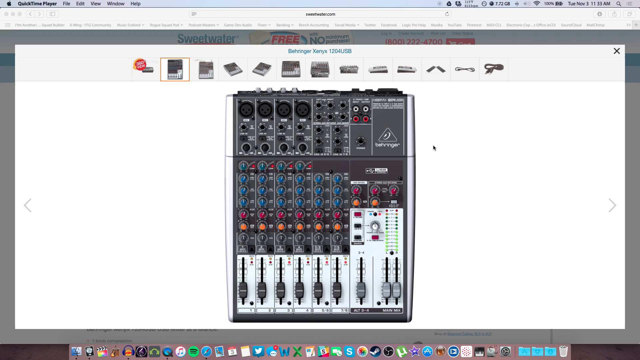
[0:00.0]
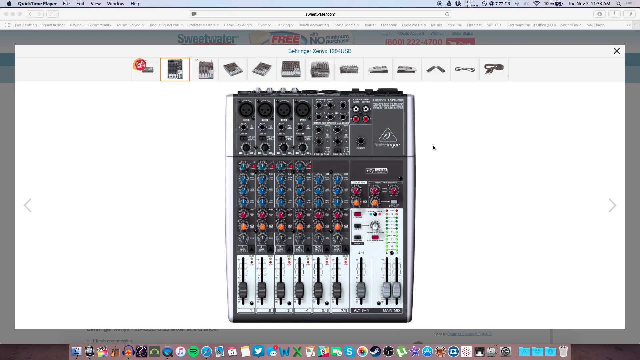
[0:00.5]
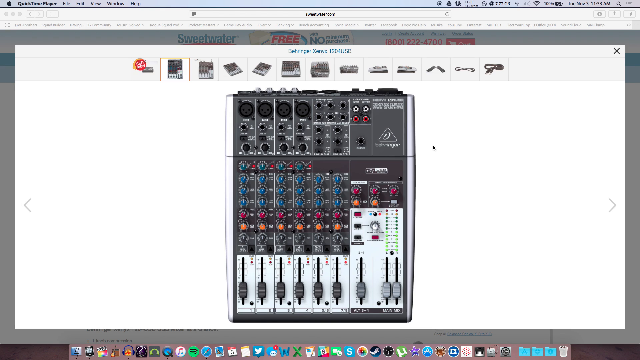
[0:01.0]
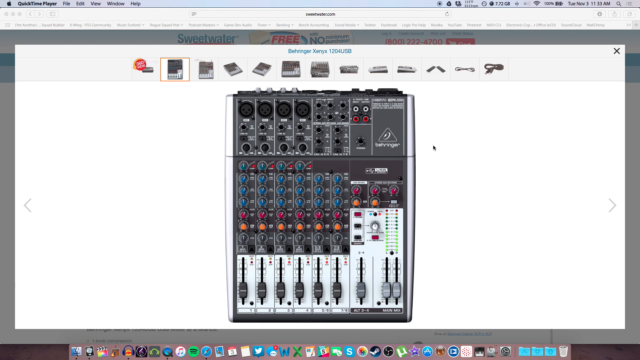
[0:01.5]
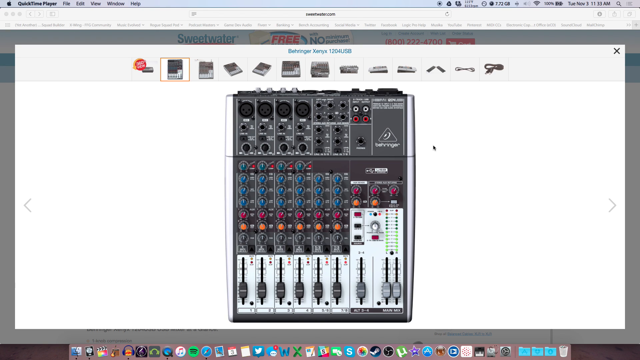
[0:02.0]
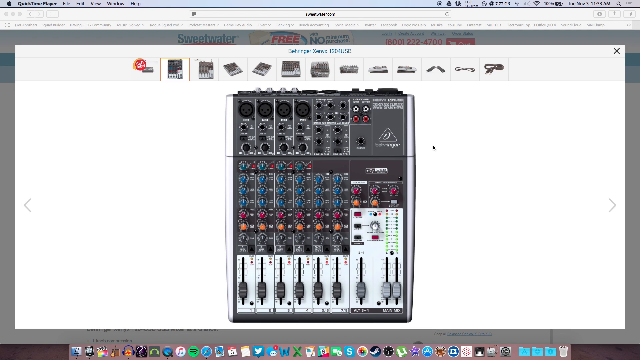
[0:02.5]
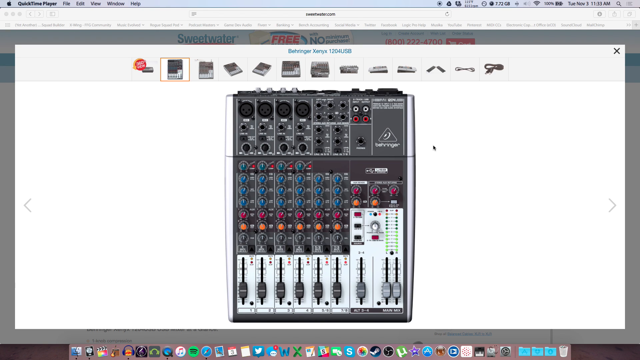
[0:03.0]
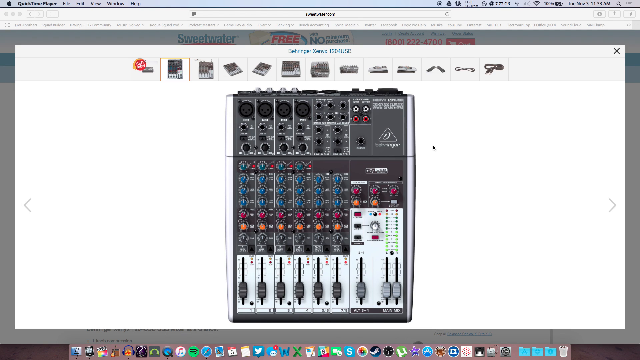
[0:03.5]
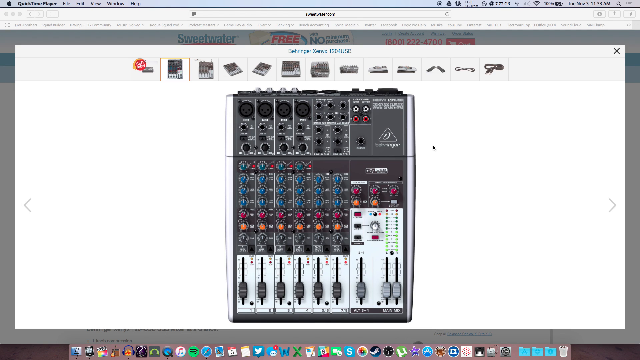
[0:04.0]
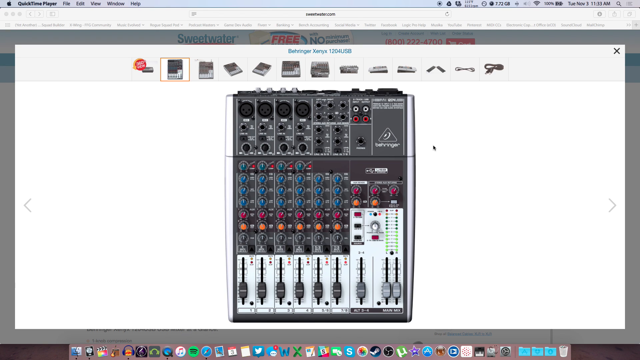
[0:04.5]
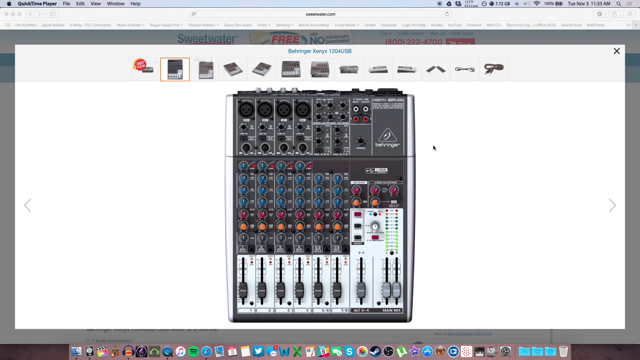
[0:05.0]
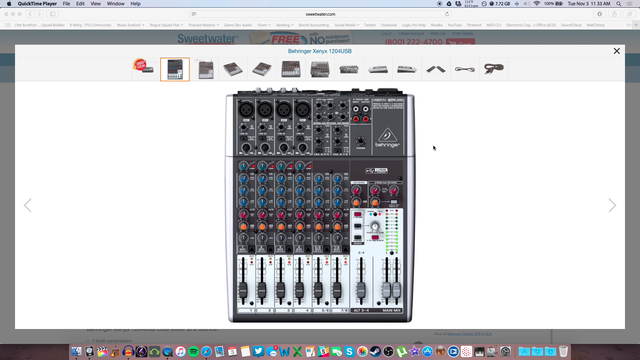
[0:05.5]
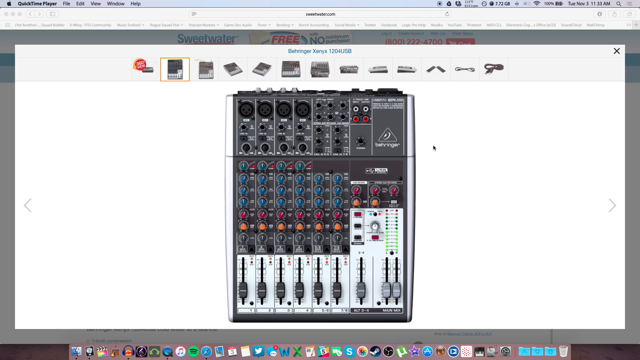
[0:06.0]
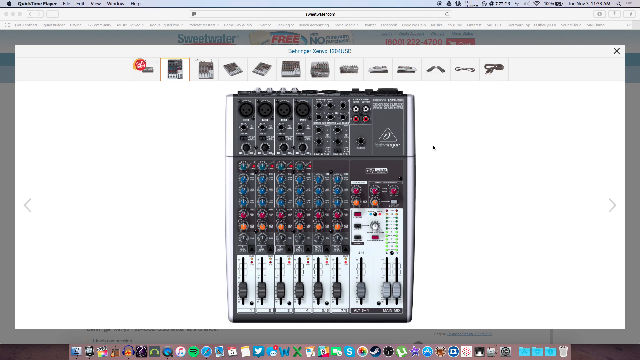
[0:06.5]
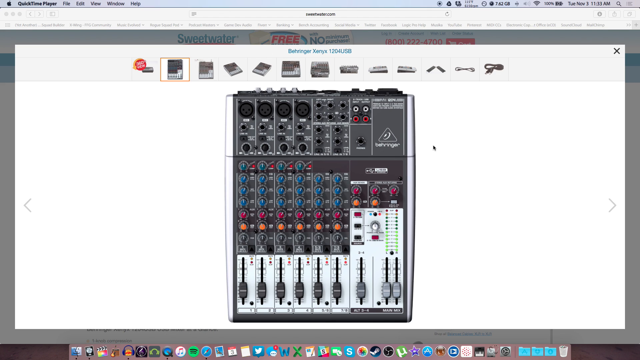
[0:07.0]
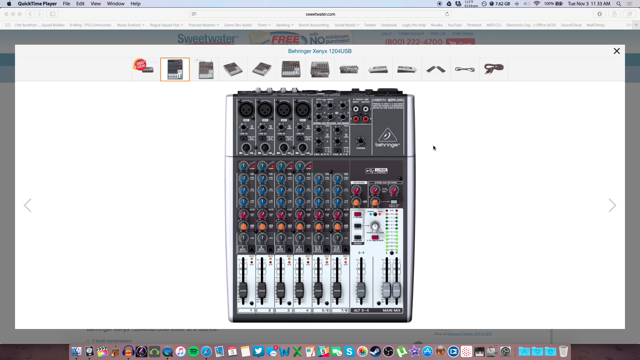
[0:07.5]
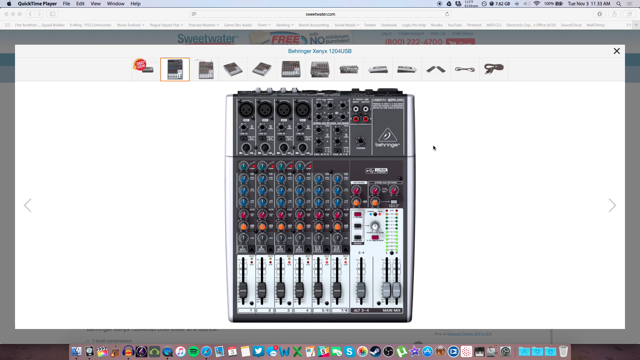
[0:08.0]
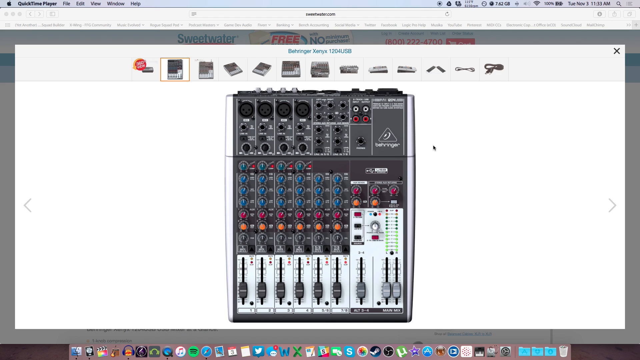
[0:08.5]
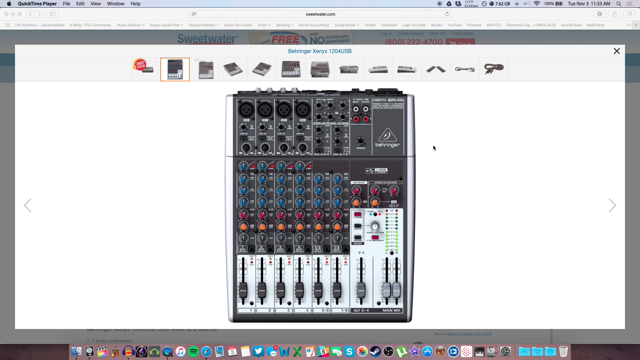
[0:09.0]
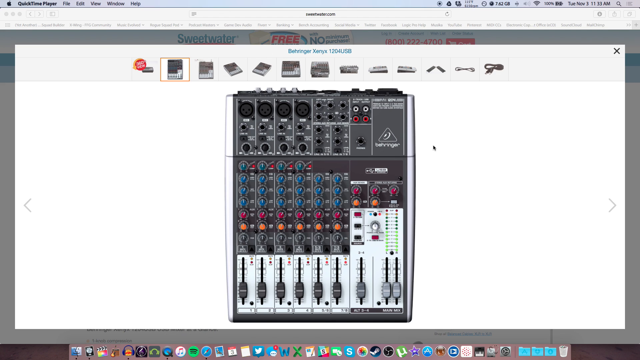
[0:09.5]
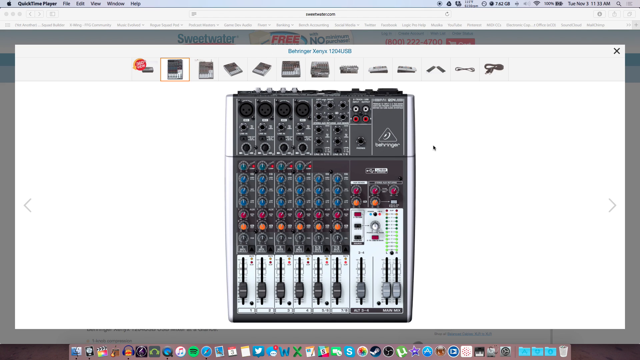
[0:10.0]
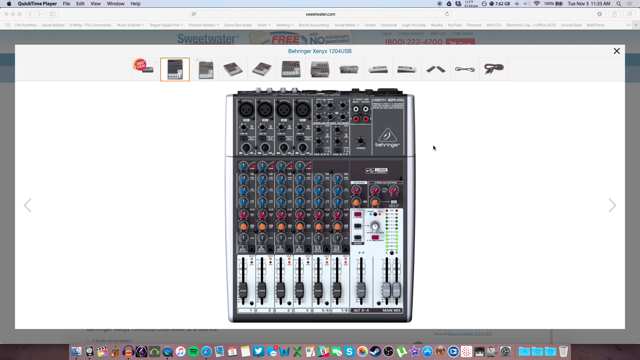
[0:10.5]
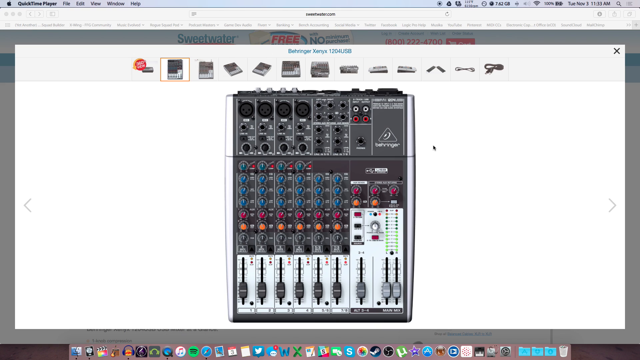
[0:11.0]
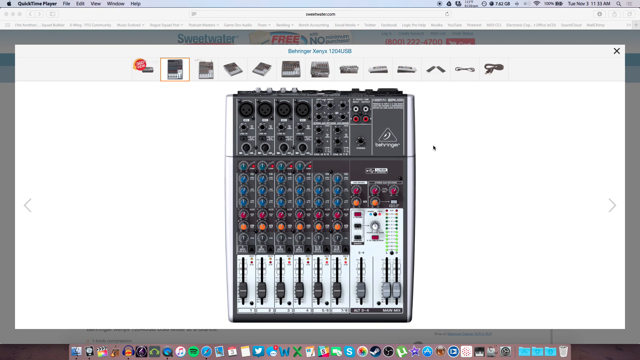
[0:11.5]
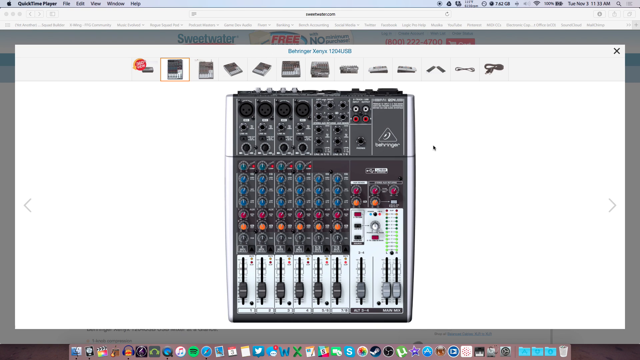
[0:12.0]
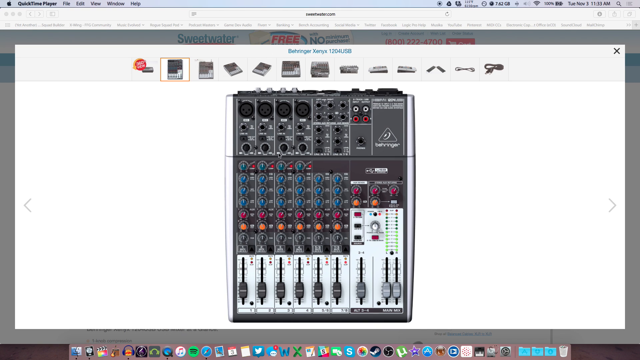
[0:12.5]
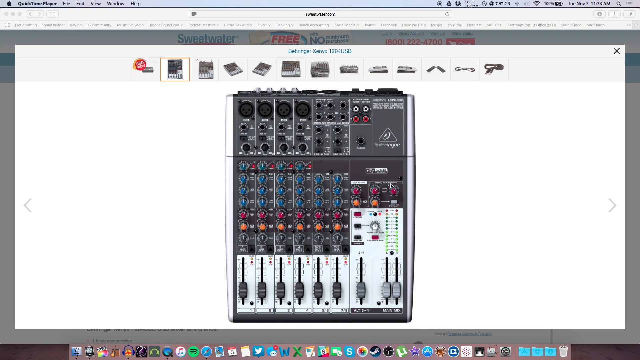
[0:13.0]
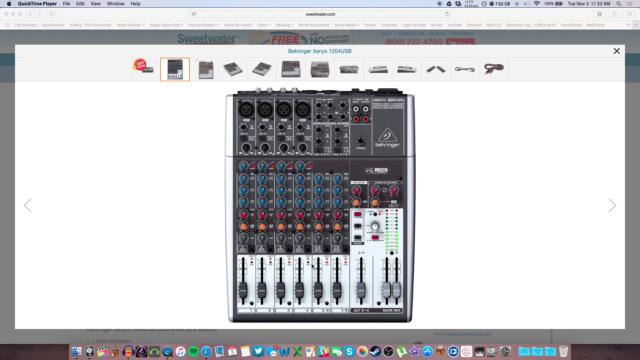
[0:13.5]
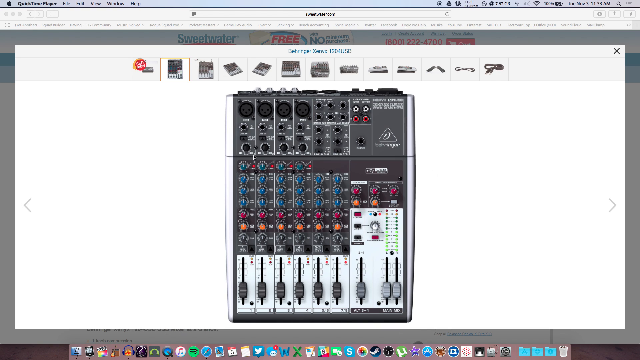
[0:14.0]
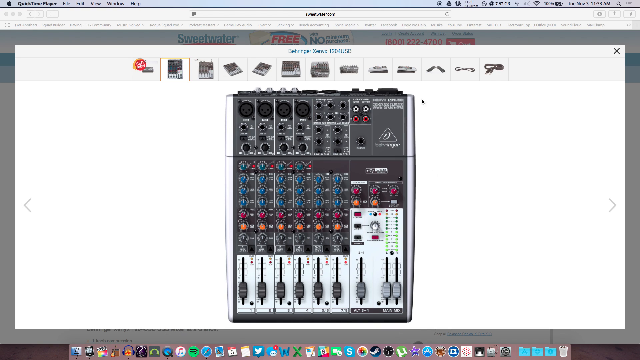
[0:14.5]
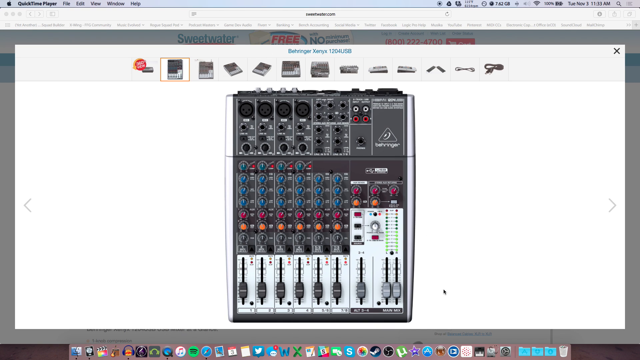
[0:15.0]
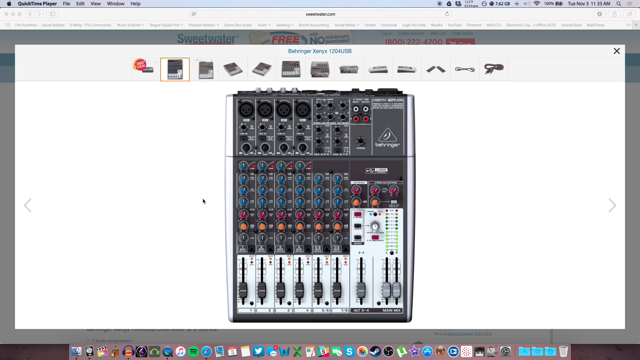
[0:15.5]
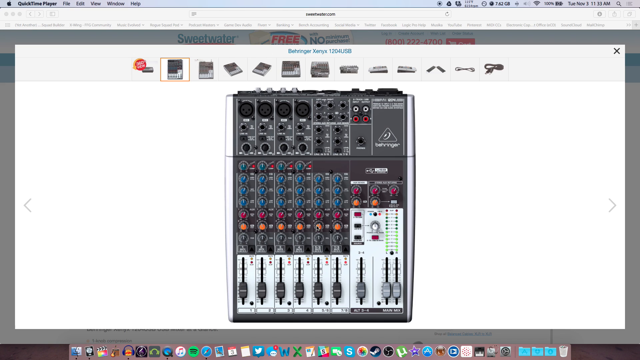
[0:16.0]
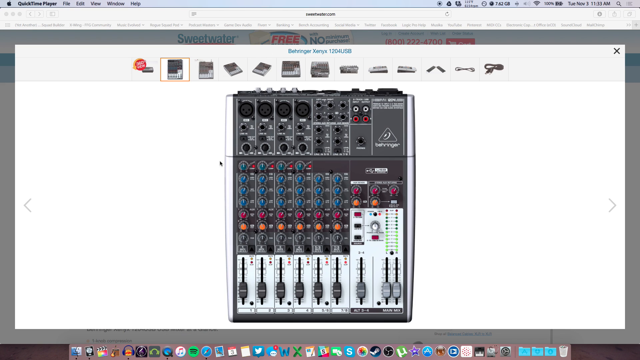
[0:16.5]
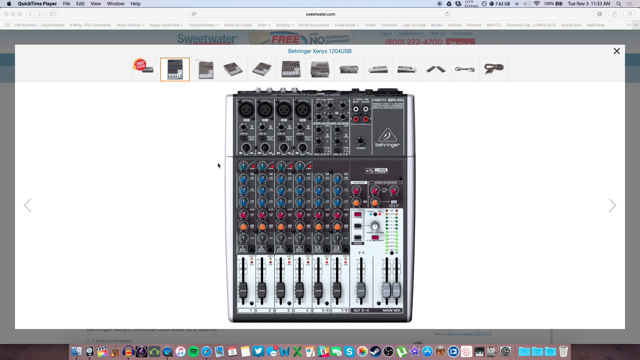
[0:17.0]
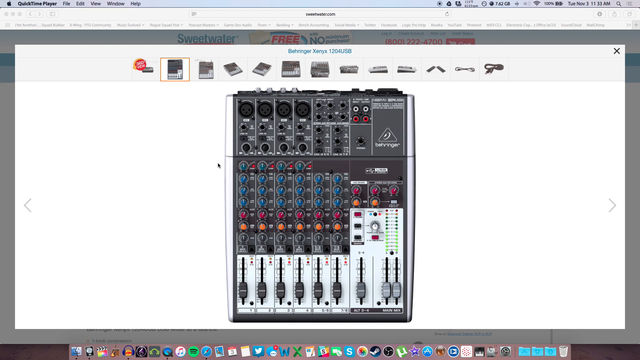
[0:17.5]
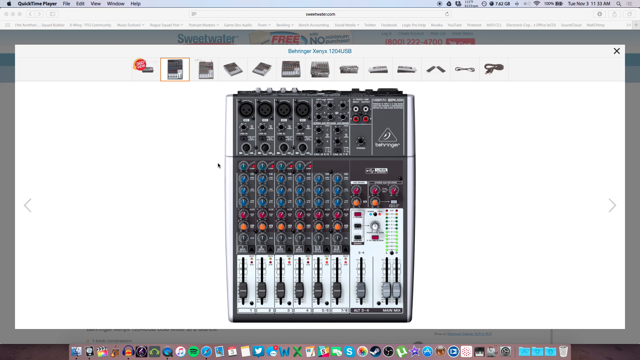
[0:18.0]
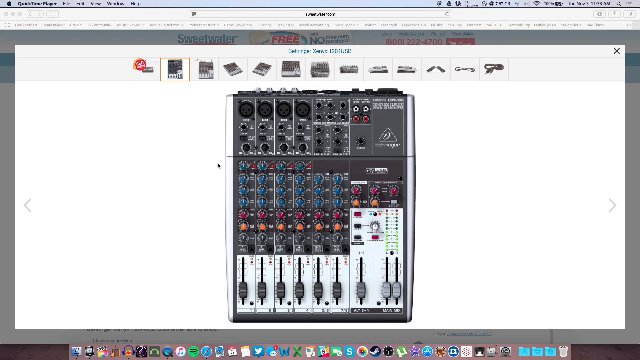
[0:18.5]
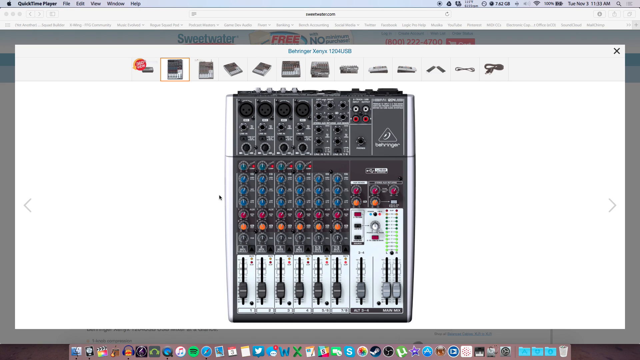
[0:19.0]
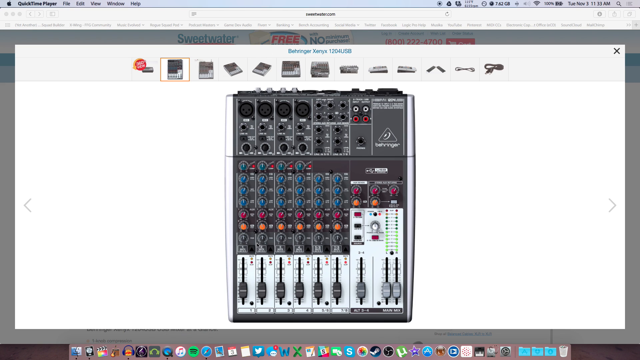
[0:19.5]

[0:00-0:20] This seems to be a picture on a website where someone is maybe considering buying something. At the top there are several images, and the site allows going through each image to see a different view of the product. The view currently up looks like some type of switchboard. Its top part has different things to plug into, apparently of varying sizes with varying kinds of sockets: one is like an in-out aux, and another looks like it has three holes. Below that is a circuit in blue, red and orange, which maybe is also where things plug in. At the very bottom are dials that move up and down; six or seven of them are the same color and size, and three off to the other side are a different color. Based on the textures of the plates, the switchboard is divided into sections: a gray section, a really dark gray, charcoal-like section, and a silver section.